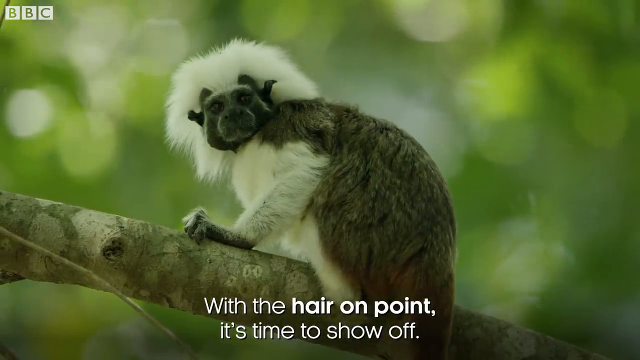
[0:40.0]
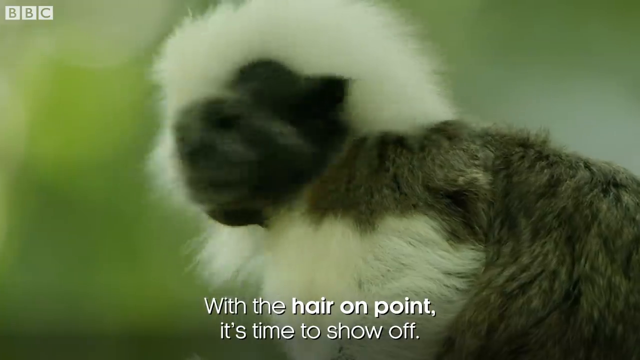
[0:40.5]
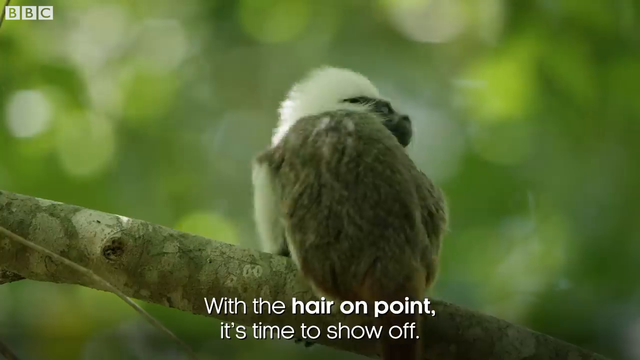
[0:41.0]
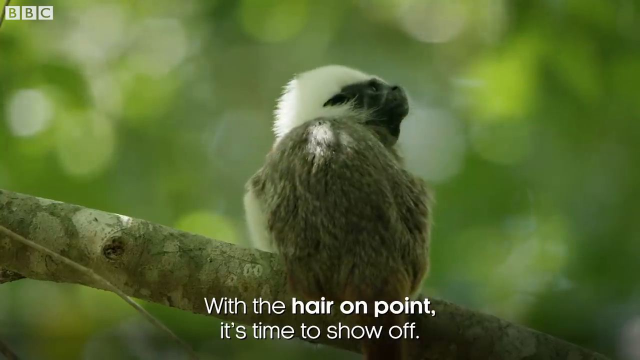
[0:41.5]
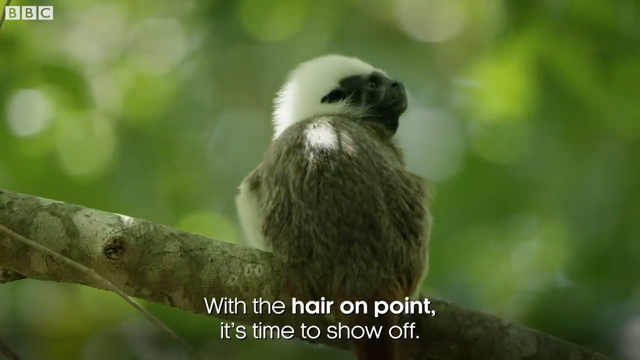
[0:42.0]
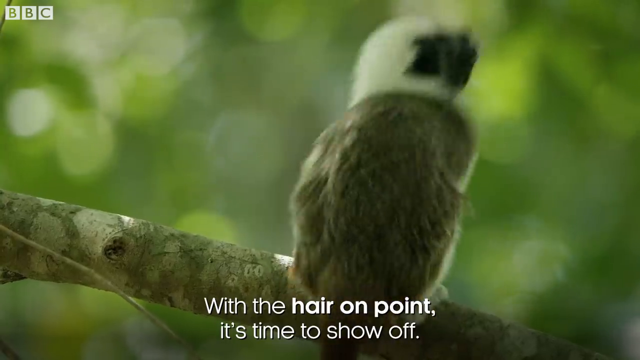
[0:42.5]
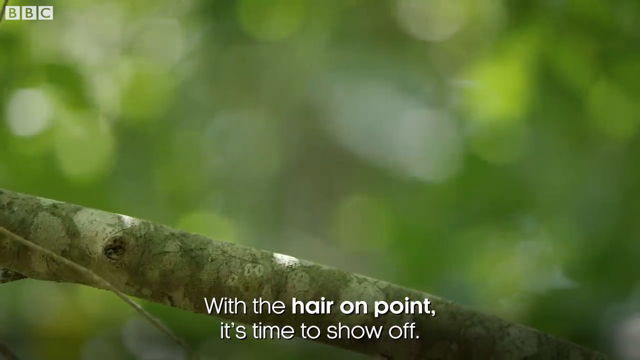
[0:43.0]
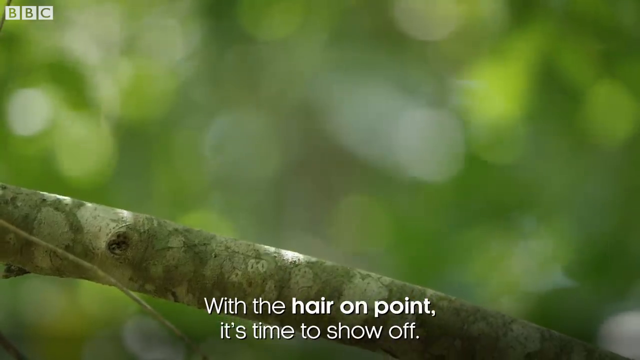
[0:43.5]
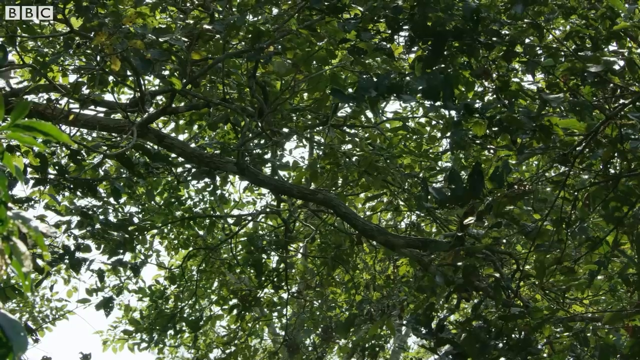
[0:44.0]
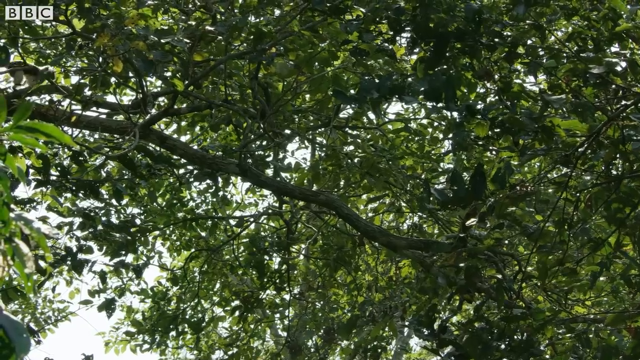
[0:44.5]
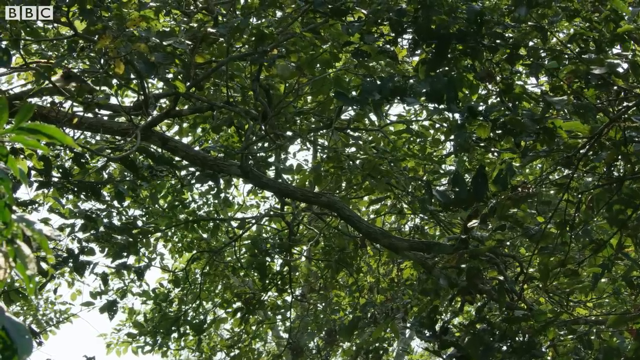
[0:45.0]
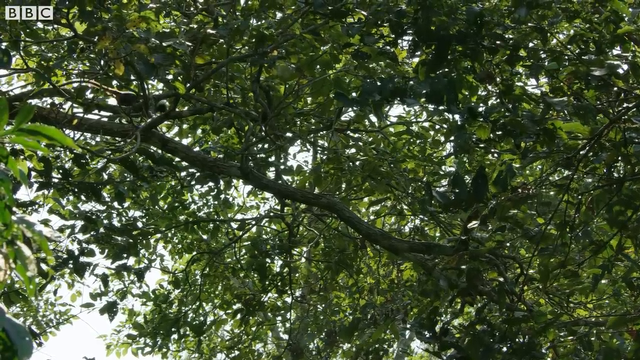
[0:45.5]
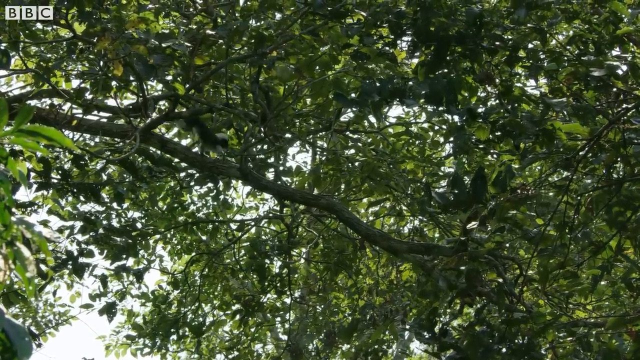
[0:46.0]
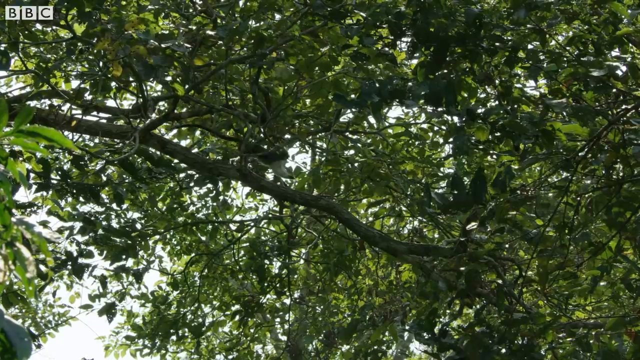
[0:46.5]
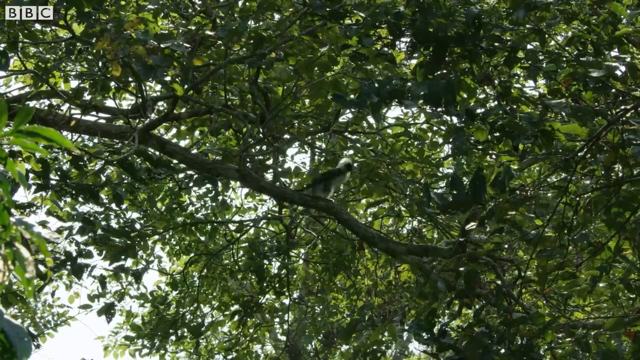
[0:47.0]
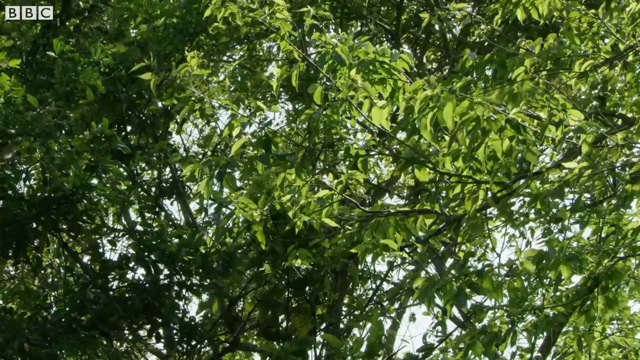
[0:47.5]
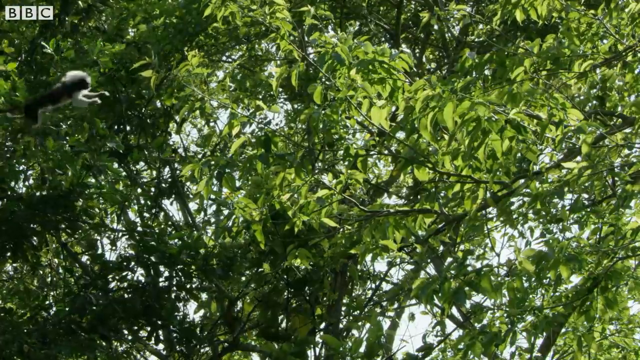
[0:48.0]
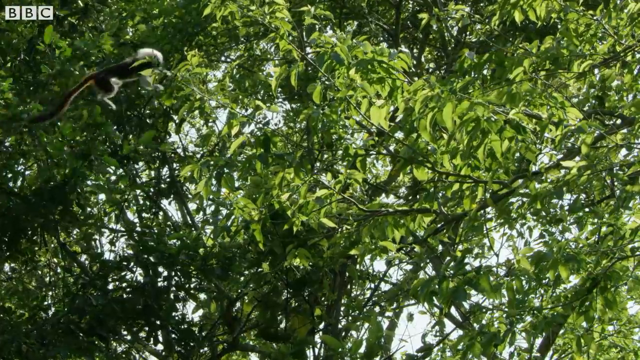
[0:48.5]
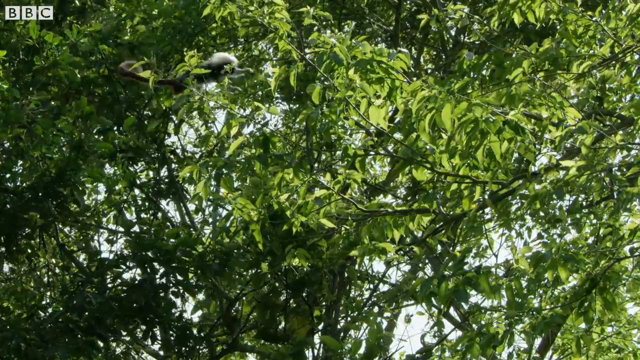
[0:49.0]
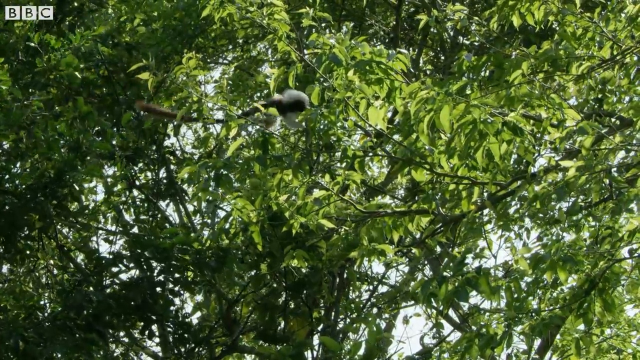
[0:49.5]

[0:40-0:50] A single tamarin monkey looks from left to right and hops up out of the frame. In a far-away shot he gallops across a tree branch, then leaps very far onto another branch, making large jumps from branch to branch. His tail is fairly horizontal while he runs and flails in the air while he jumps. The monkey has a brownish body. White text at the bottom of the screen reads "With hair on point, it's time to show off." The tree's leaves are very green; the background looks like it may be cloudy, but the sky is hard to see because the tree has so many leaves.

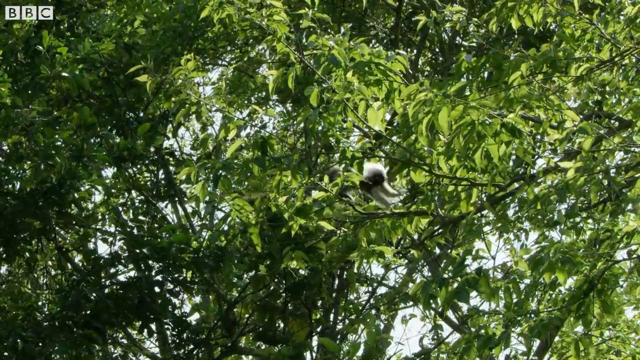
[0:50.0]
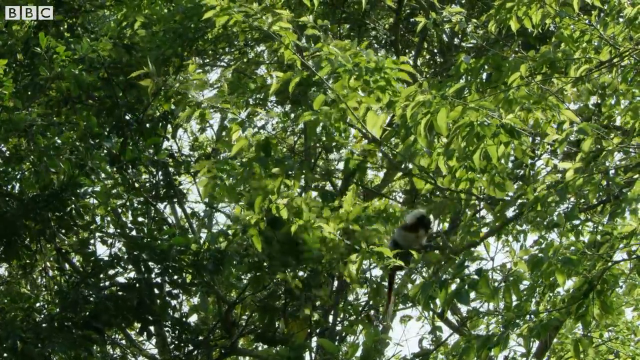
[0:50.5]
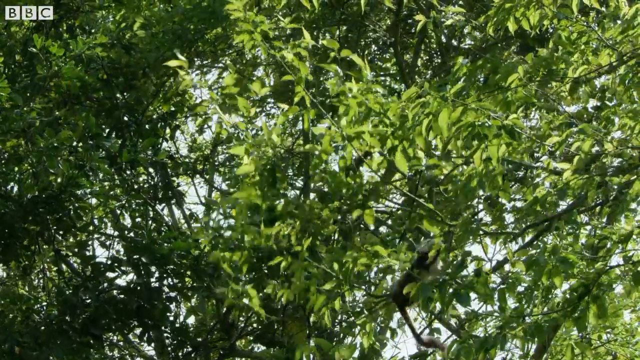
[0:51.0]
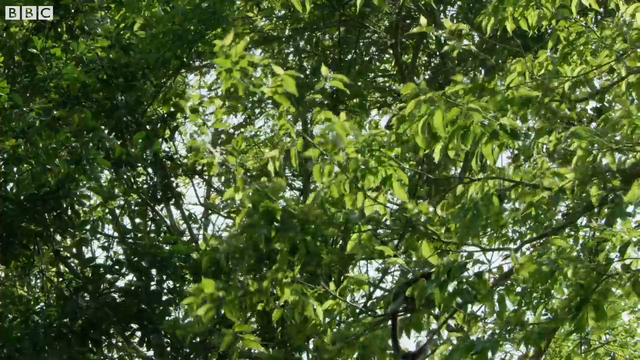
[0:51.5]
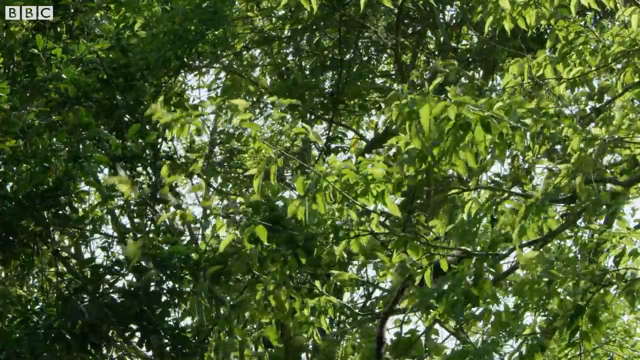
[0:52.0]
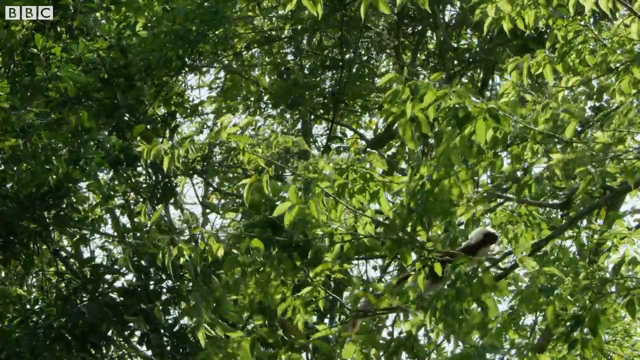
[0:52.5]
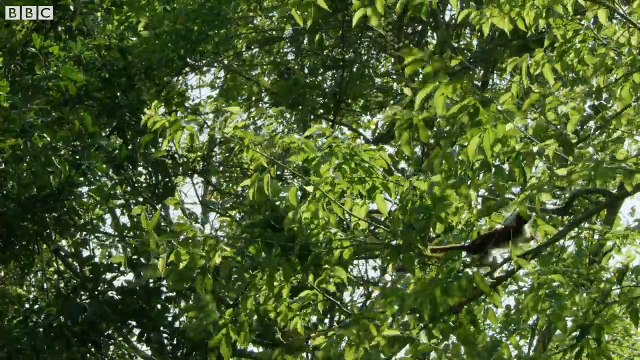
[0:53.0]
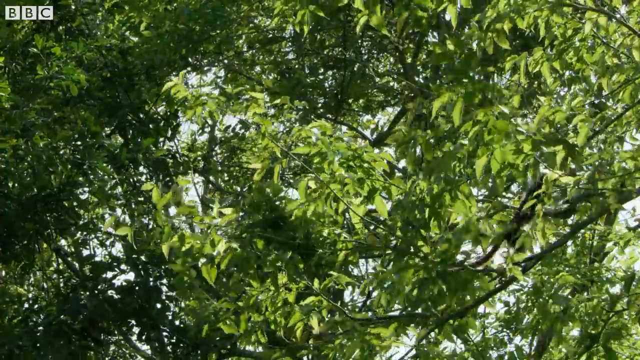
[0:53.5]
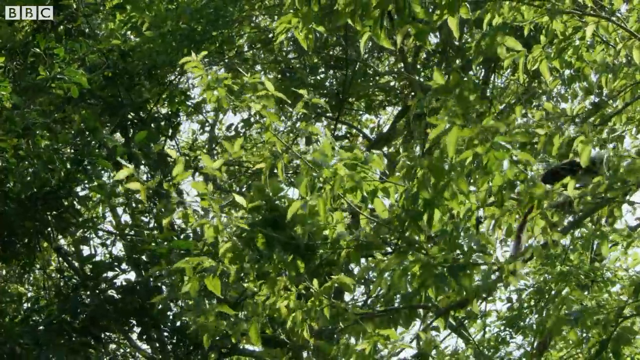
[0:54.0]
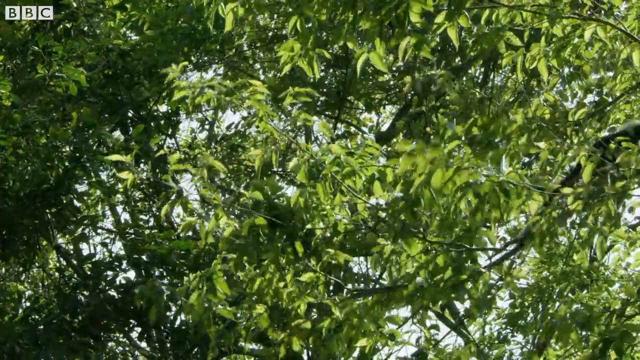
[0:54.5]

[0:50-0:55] The tamarin monkey comes out of a jump, landing mid-air on a tree branch, and looks like he is climbing on the tree. The branch is kind of weighted down by the monkey and dips a little toward the bottom right of the screen. Starting from the left side of the branch, the monkey climbs up diagonally toward the right, and the tree sways and bows a bit. The leaves on this tree are a lighter green, while the leaves of the tree in the background are a darker green.